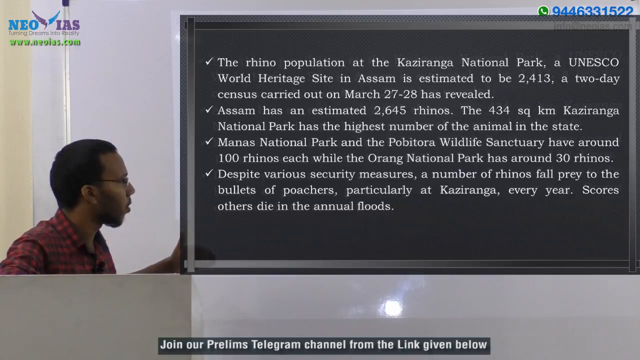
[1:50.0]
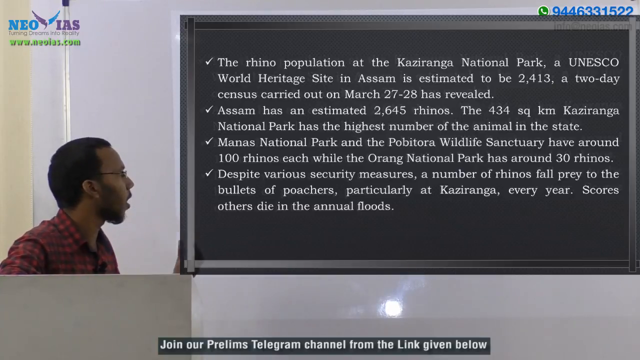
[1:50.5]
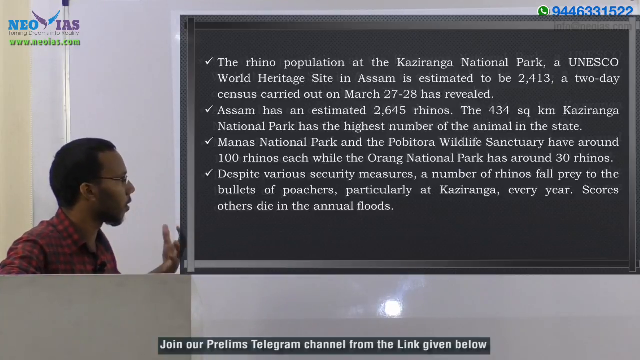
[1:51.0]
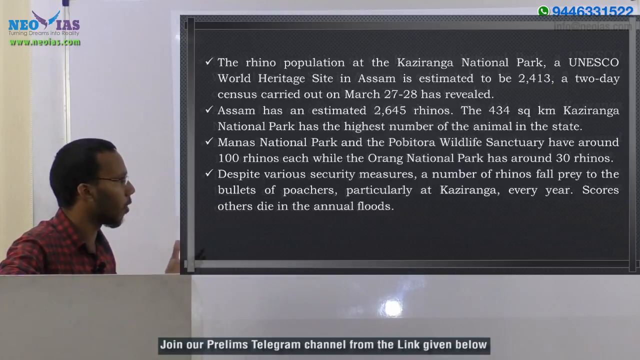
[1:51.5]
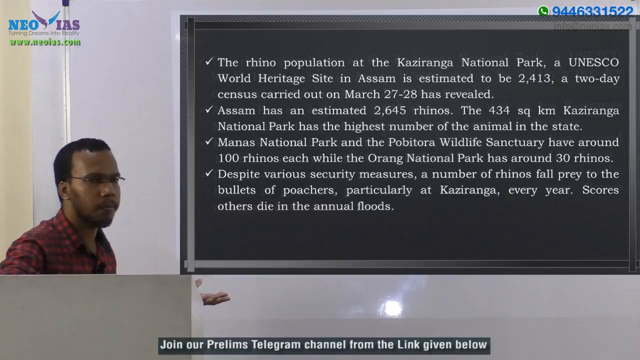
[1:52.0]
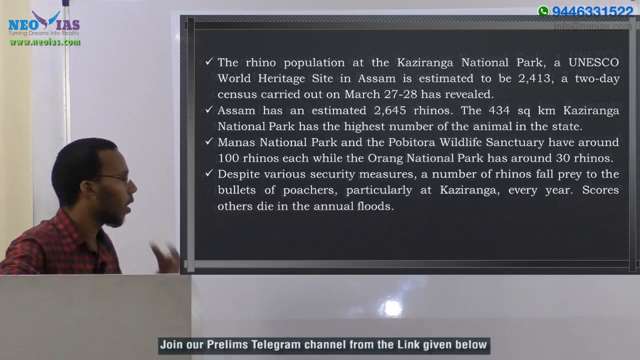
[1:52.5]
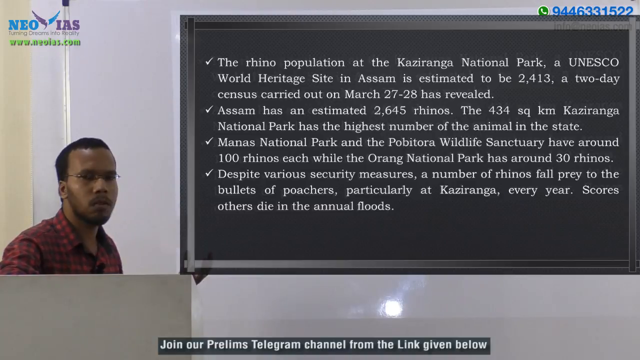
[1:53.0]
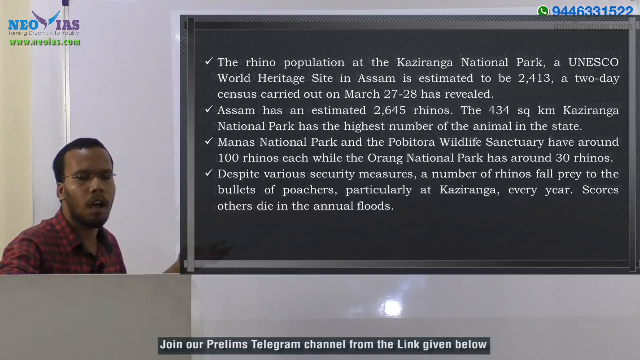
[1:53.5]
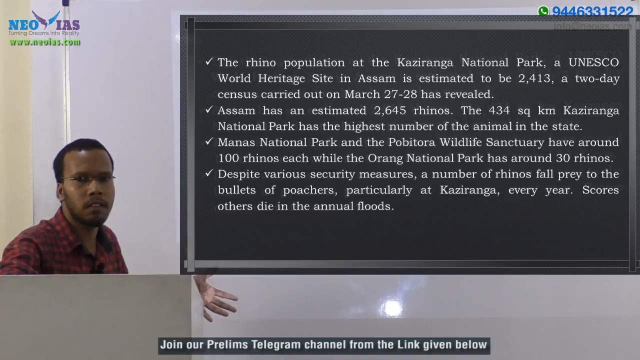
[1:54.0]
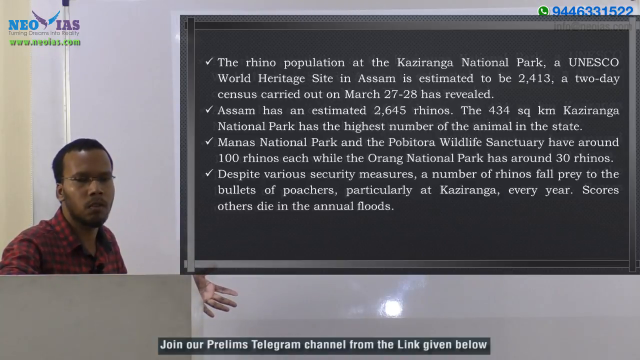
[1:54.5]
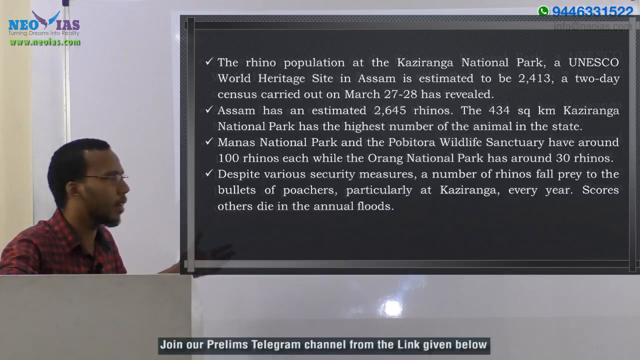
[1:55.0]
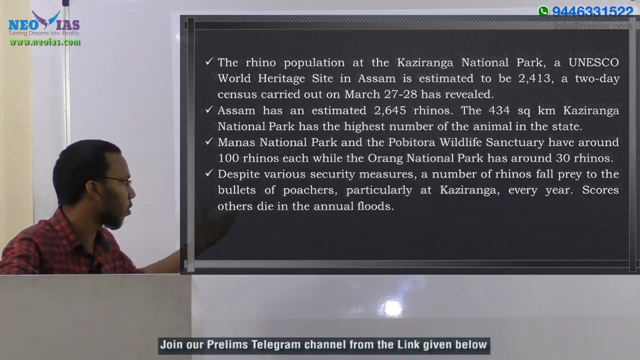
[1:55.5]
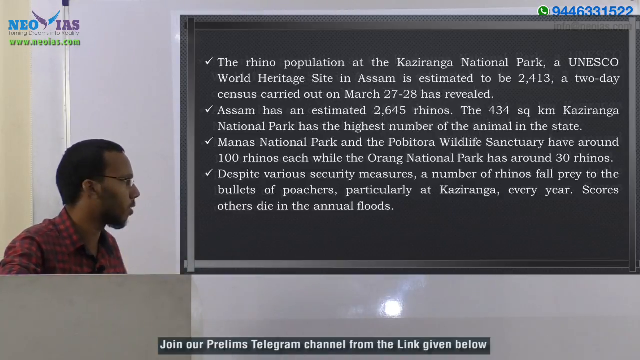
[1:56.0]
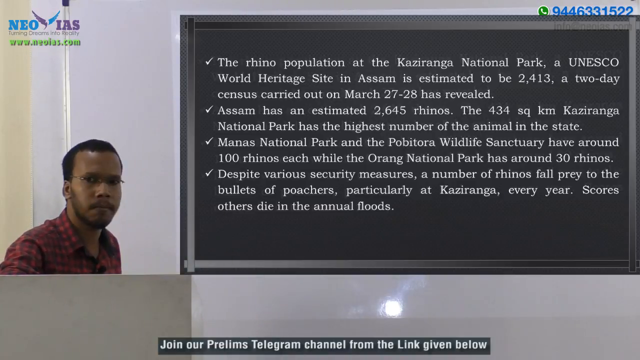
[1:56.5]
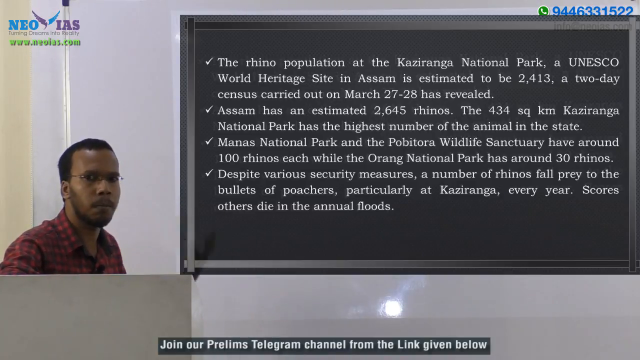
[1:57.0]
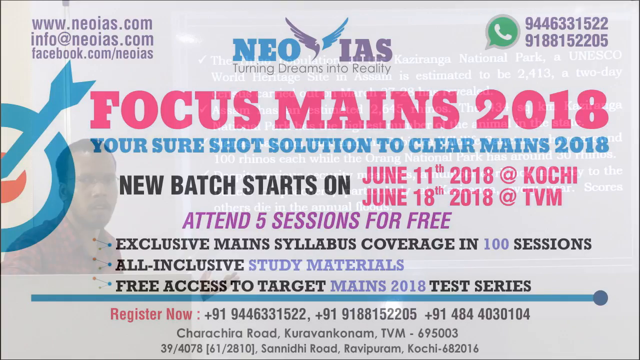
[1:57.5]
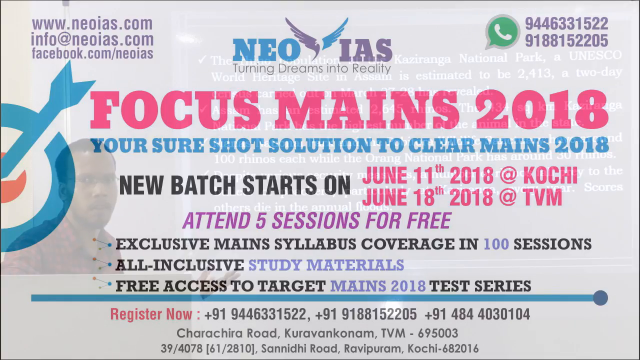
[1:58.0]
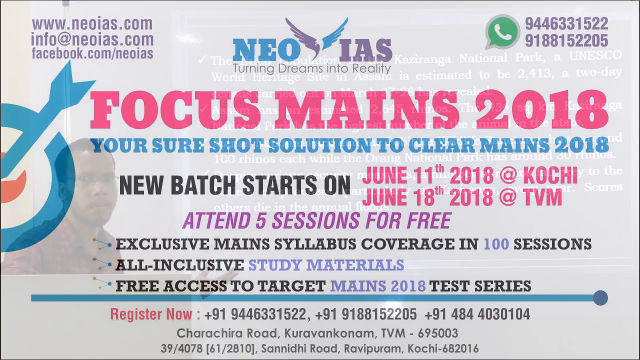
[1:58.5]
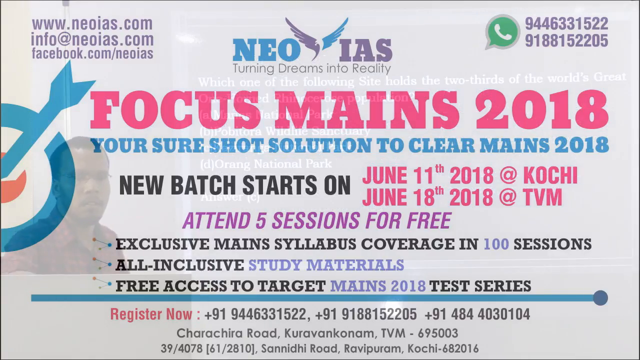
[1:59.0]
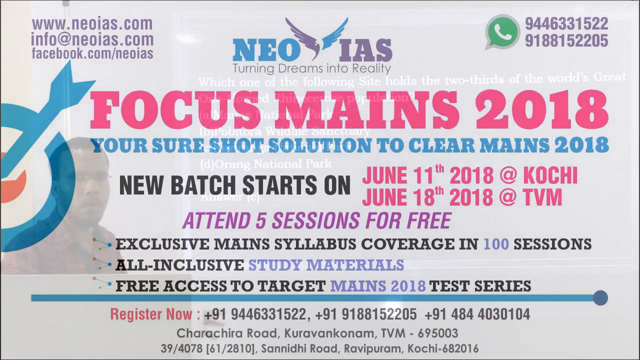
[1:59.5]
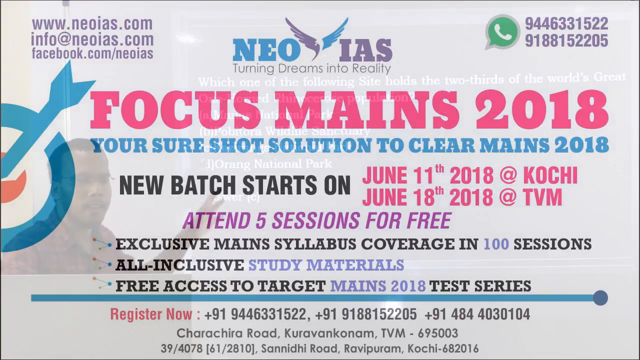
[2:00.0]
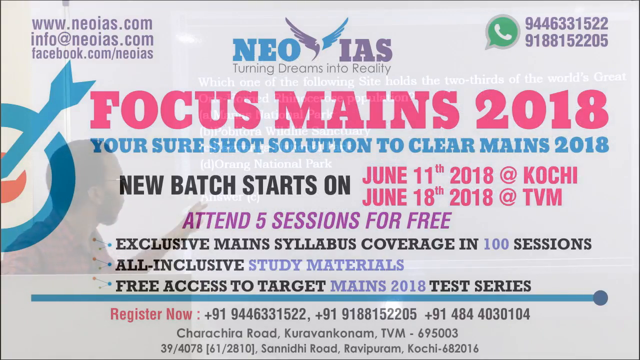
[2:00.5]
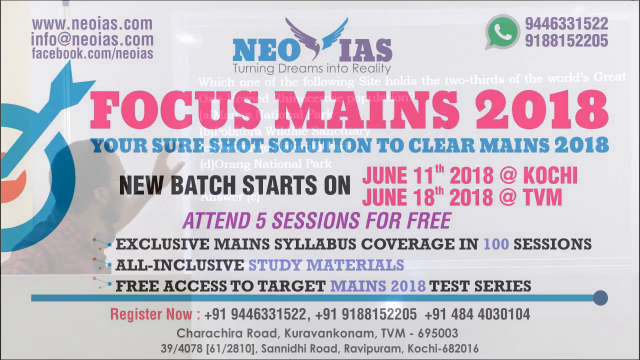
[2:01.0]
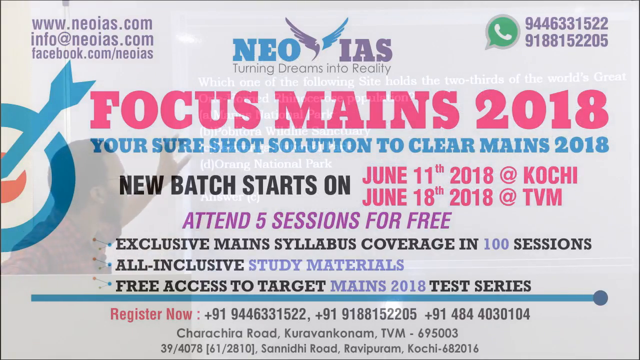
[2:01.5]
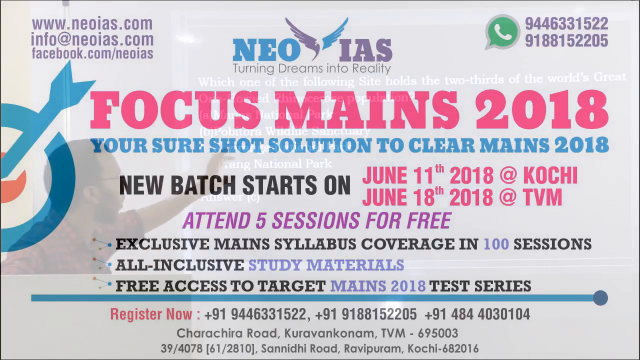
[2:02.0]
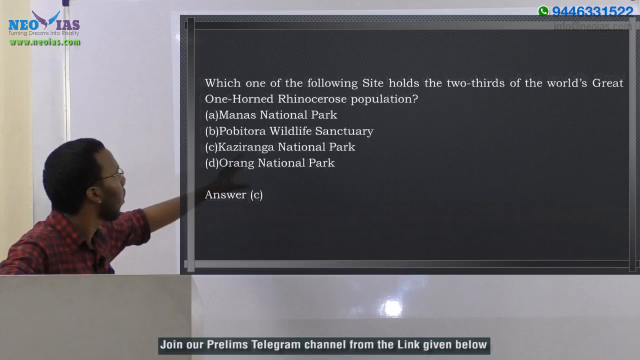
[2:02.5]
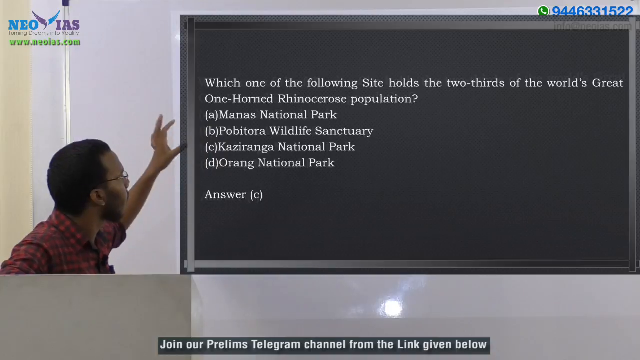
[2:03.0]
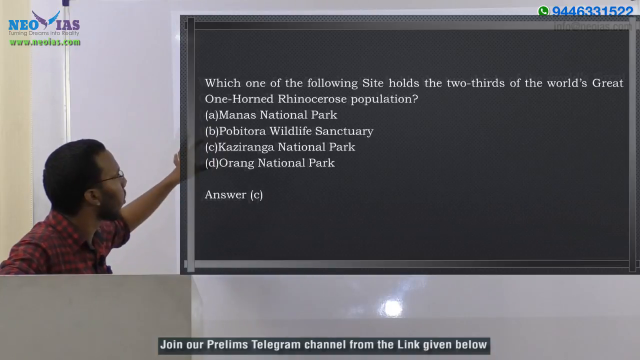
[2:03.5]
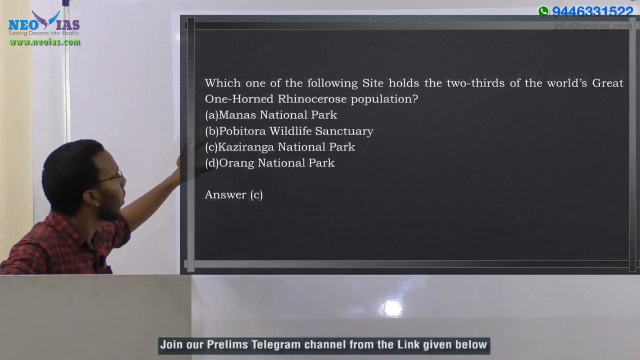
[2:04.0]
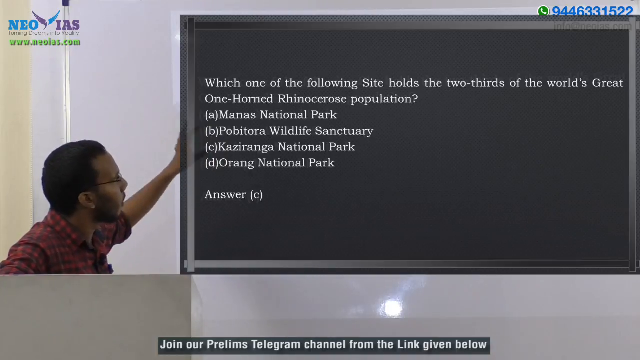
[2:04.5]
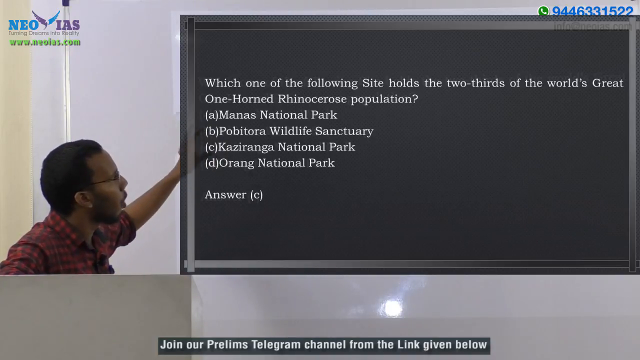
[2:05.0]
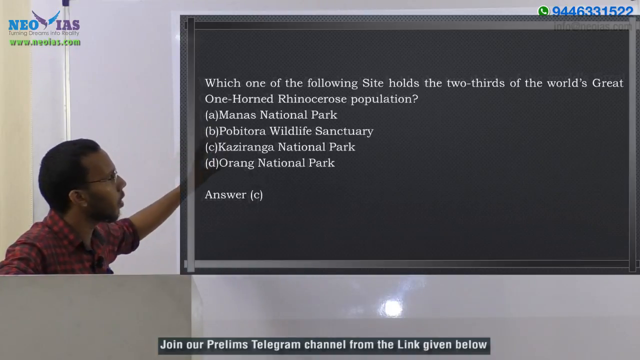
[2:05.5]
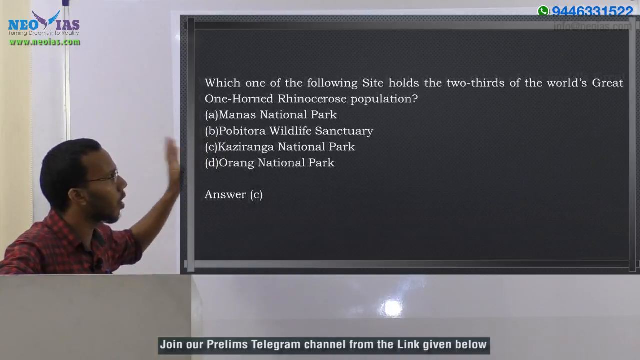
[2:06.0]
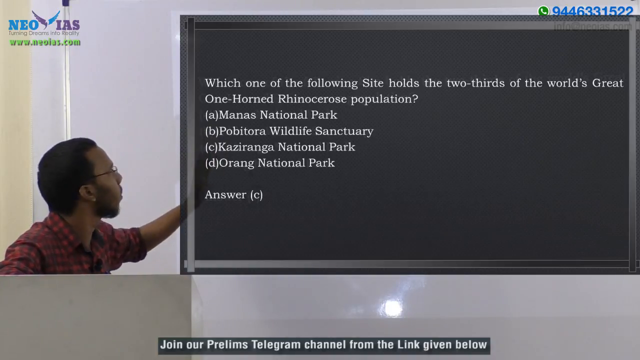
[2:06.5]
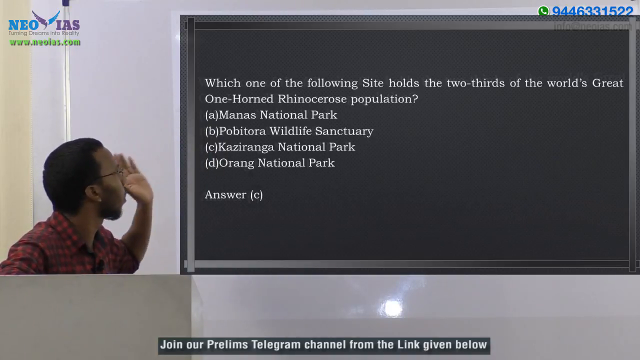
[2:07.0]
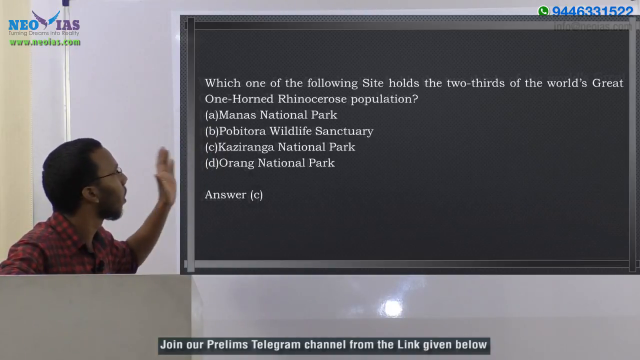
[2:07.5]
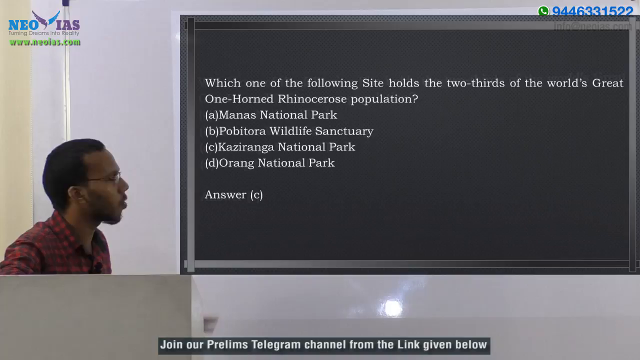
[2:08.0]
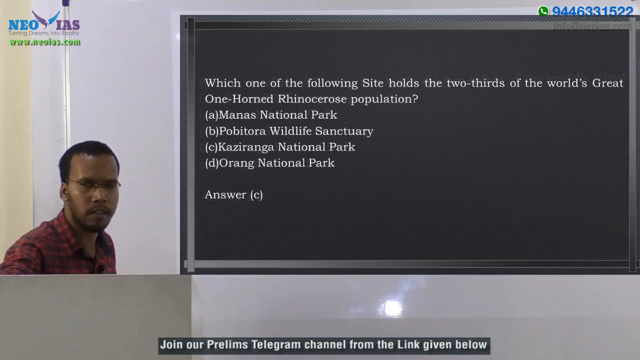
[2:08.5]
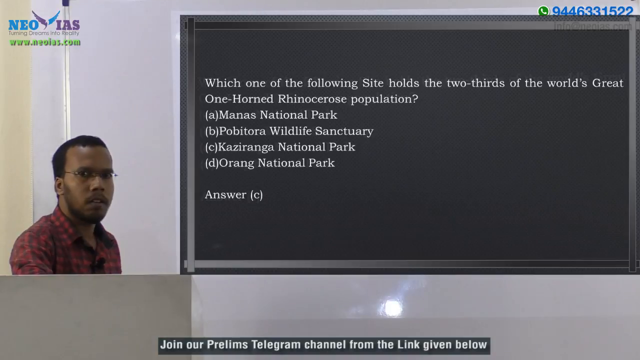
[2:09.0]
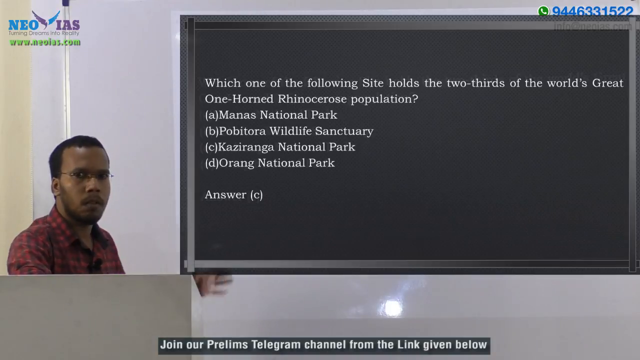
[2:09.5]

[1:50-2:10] The man gives information directly to the audience while reading something on a board on the wall of his office. That board is covered by the blackboard, which has information about rhinos, UNESCO World Heritage, and more information about hunters and similar topics. He keeps switching between looking at the wall and looking at the camera, extending his hands toward the audience or toward the wall as he explains. Then what looks like a pamphlet appears, covering the whole video like a transparency so that what is behind it cannot be seen. The pamphlet has a lot of information: WhatsApp numbers, contact information, Facebook pages, and details for what looks like a course, including how to register and enroll through different numbers and social media contact methods. The pamphlet disappears and the man is visible again, still explaining while facing the wall, then he faces the camera again.